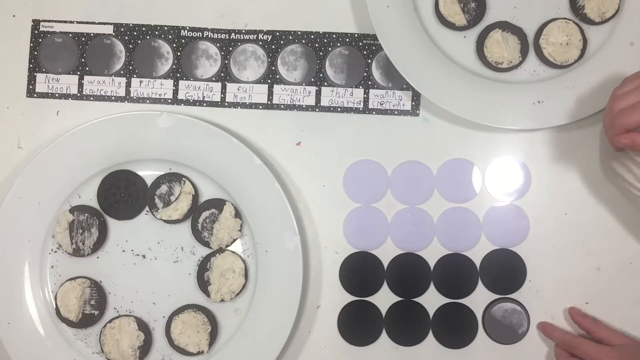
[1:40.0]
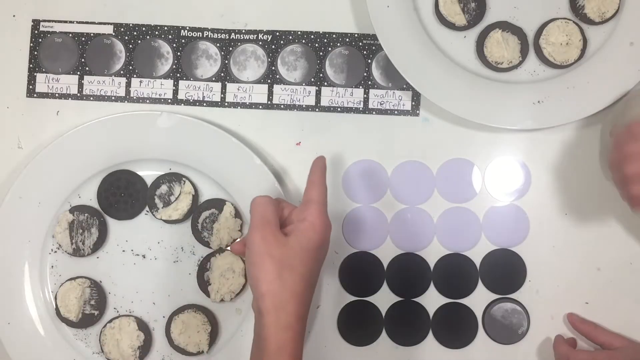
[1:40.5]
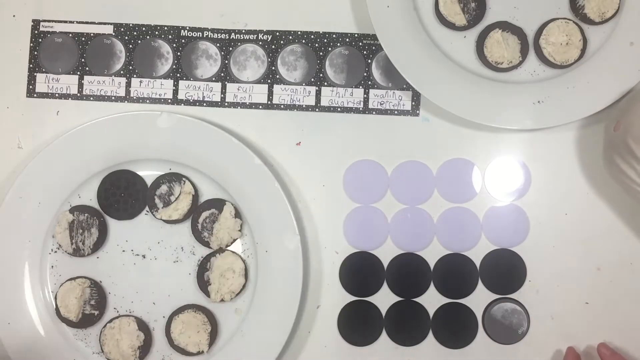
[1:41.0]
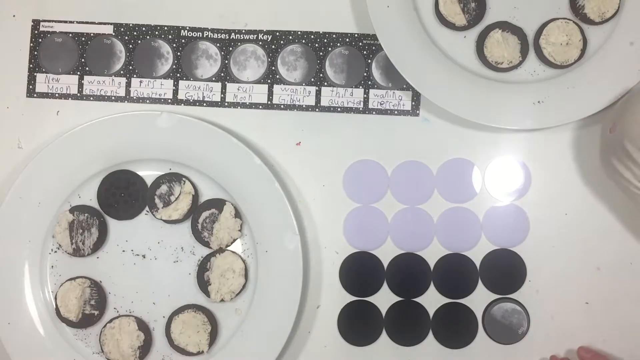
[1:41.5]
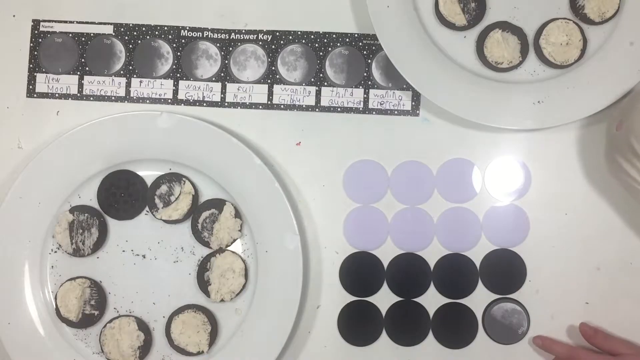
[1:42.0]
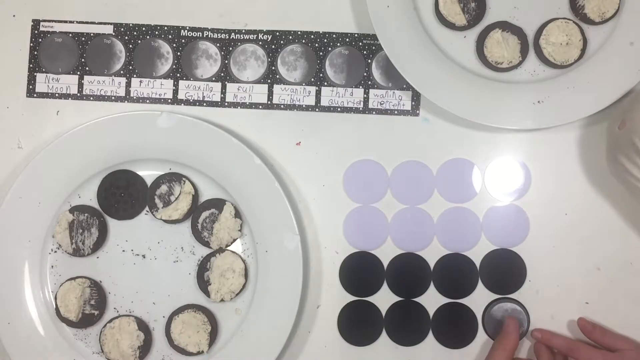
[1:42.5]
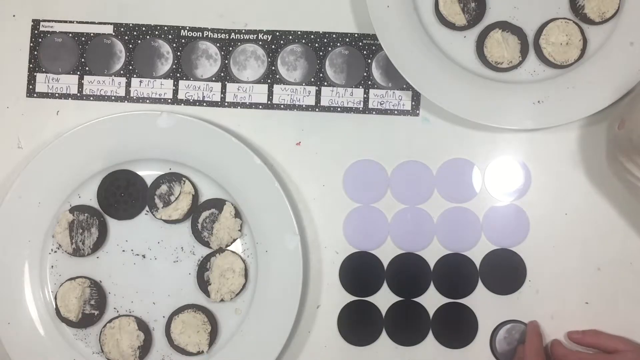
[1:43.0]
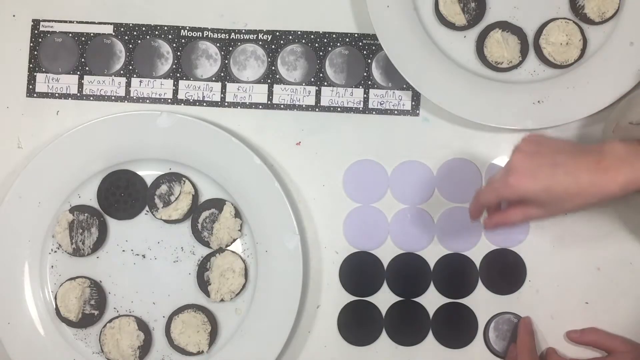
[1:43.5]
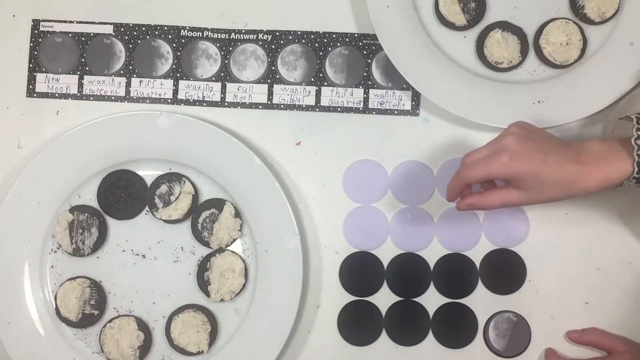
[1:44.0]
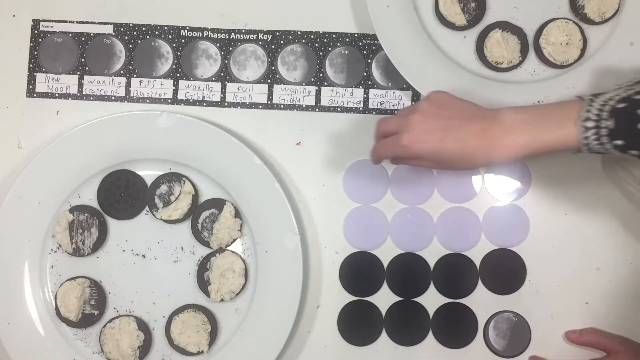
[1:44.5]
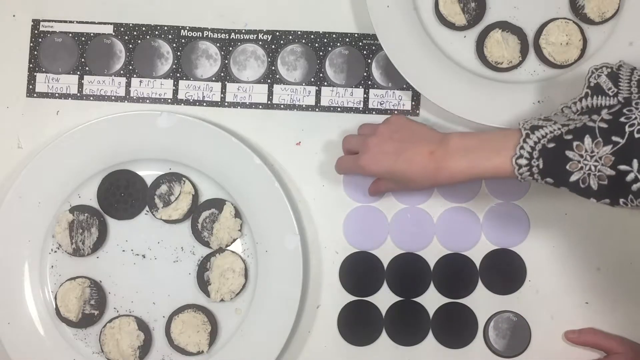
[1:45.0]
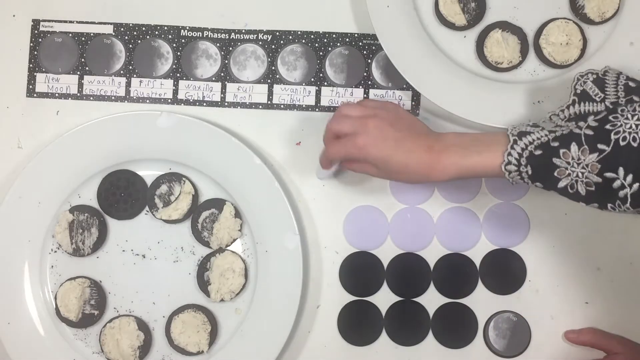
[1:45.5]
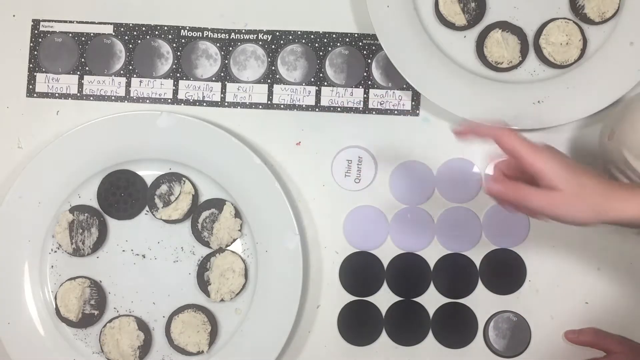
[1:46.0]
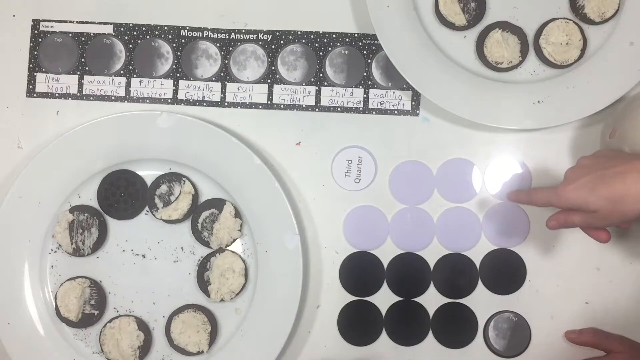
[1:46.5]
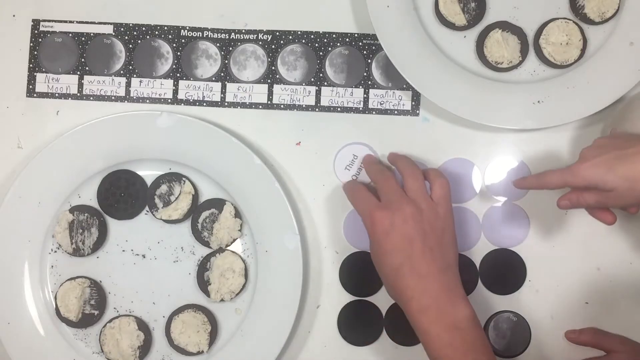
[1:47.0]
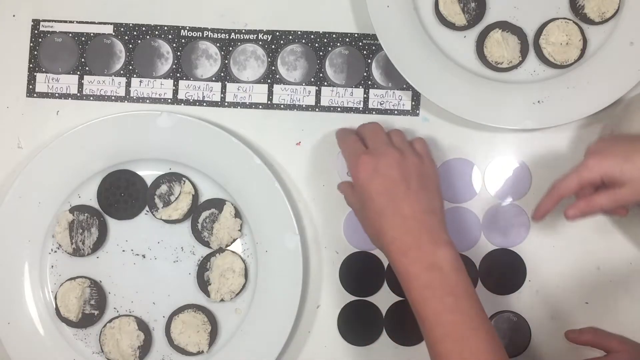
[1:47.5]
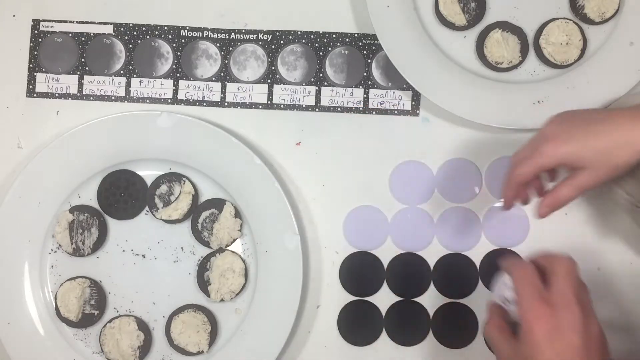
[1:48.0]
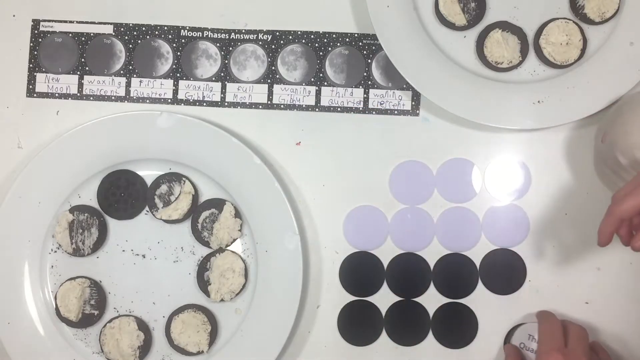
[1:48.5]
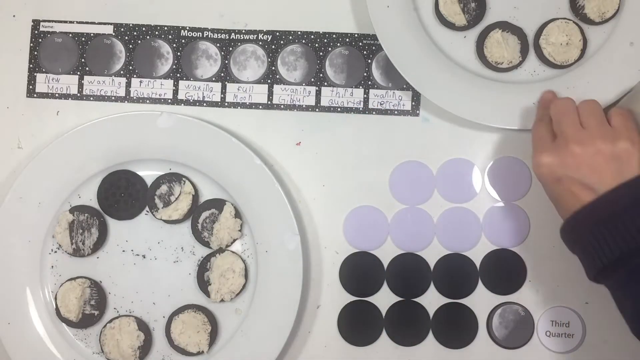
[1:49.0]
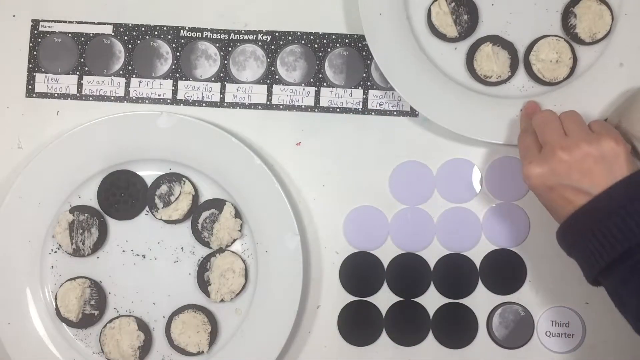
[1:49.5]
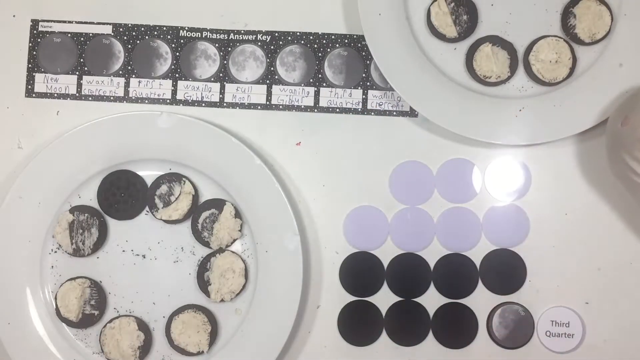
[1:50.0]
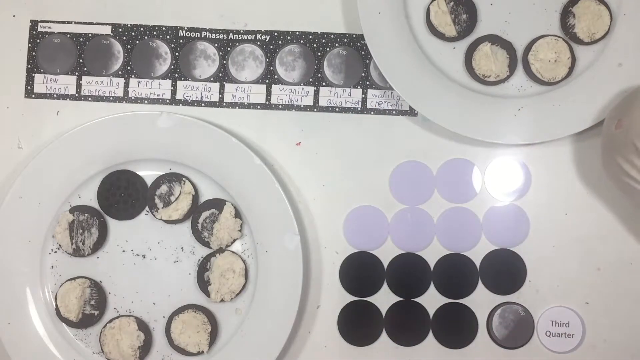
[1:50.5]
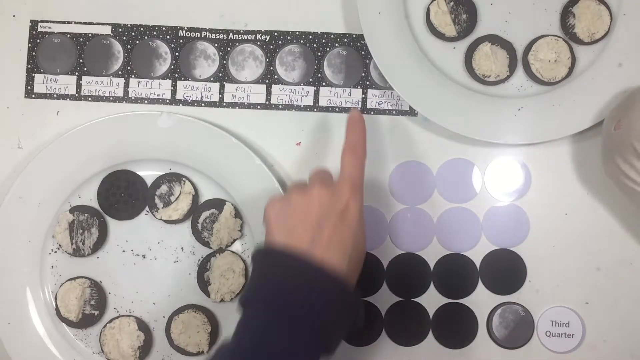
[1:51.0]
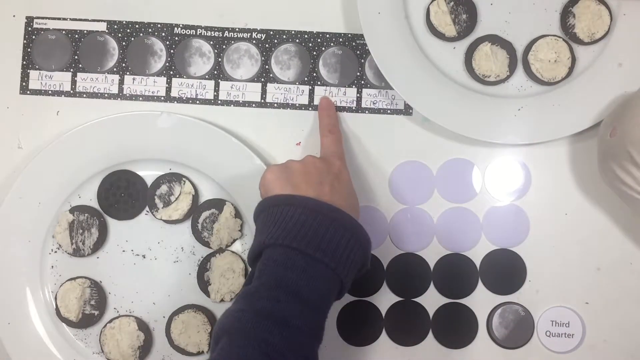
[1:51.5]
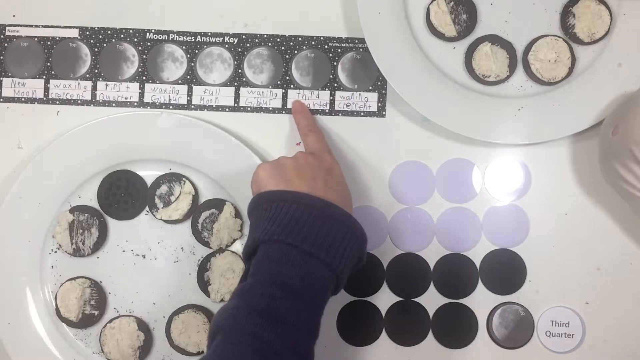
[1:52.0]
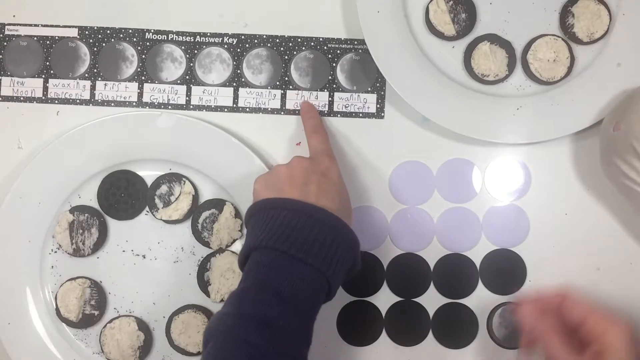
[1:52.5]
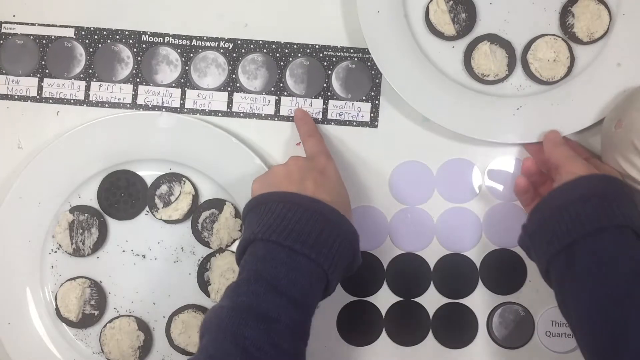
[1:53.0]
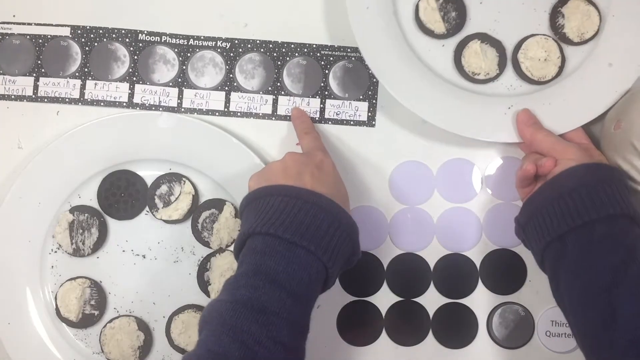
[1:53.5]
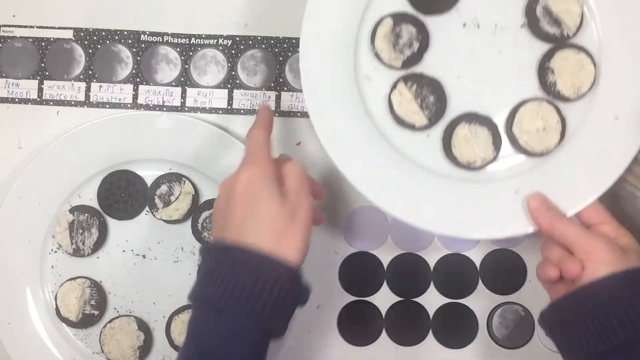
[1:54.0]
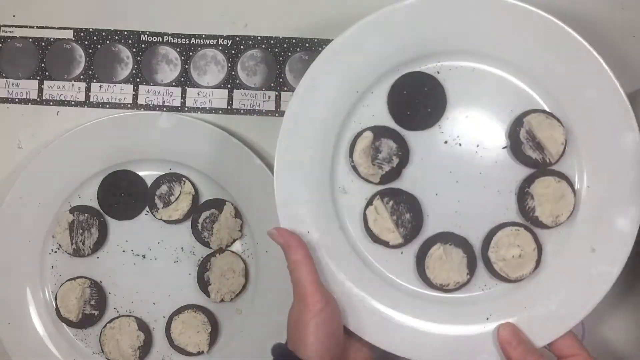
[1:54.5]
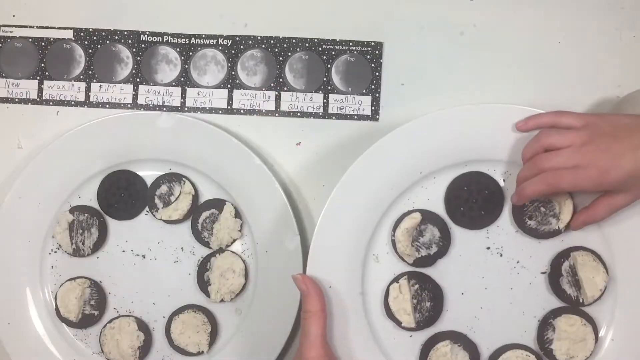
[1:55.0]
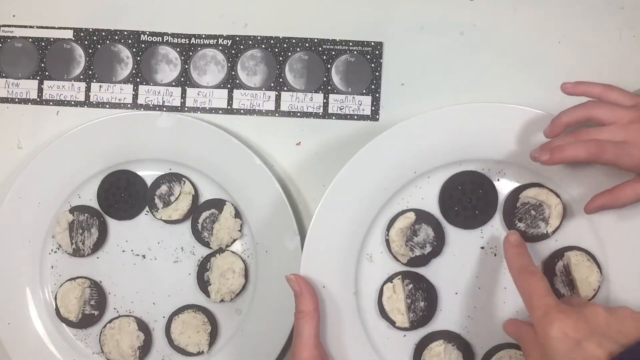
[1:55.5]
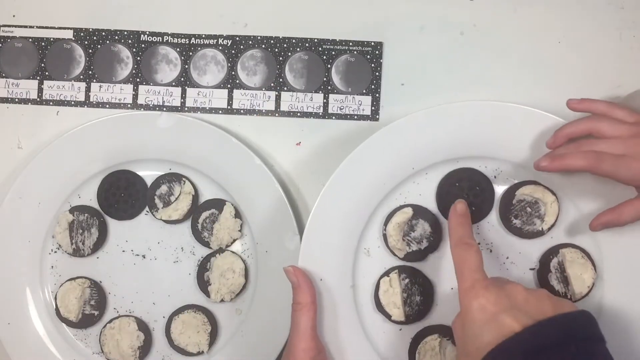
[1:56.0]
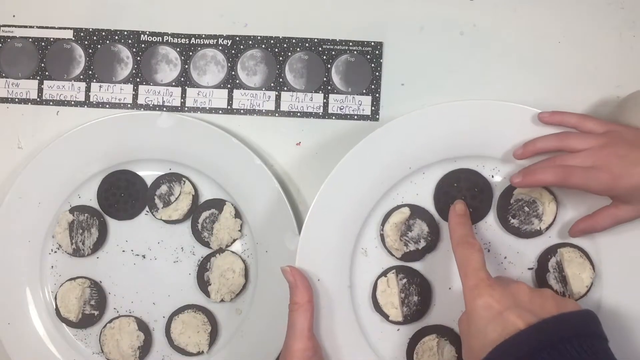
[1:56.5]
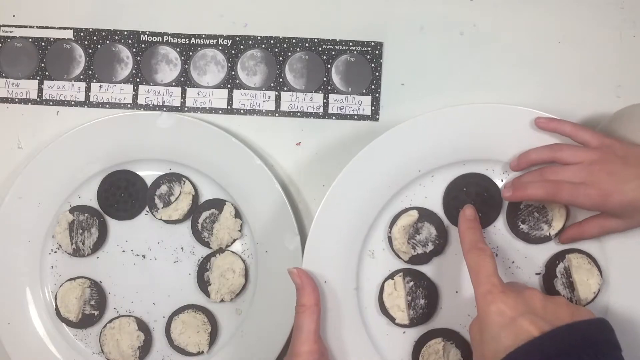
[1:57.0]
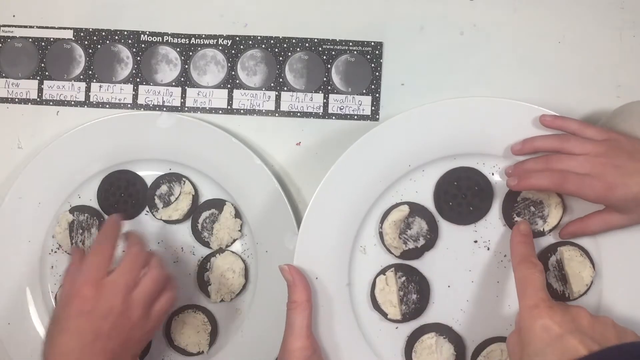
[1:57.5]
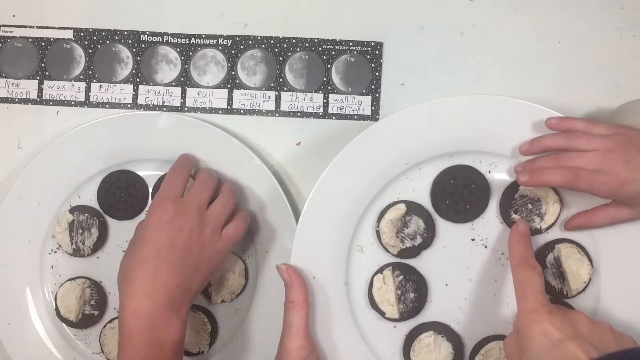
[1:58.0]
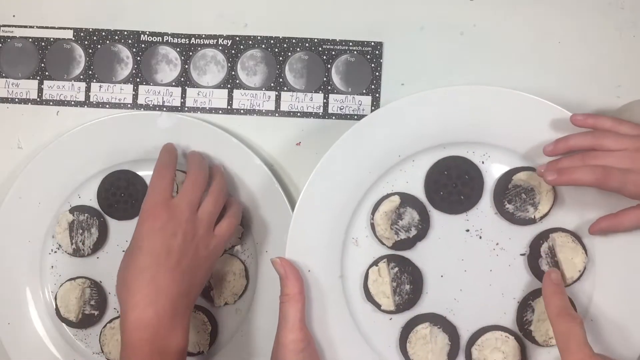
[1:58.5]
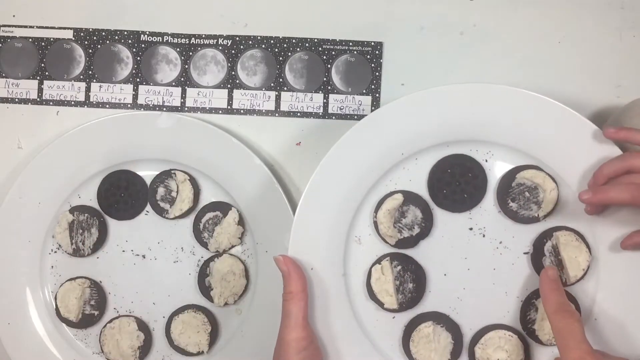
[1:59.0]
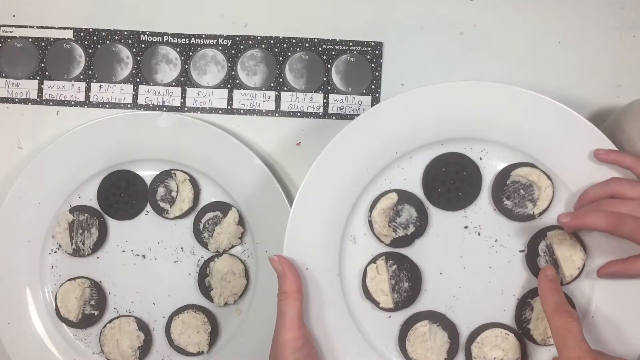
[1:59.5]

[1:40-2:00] A moon phases answer key at the top left of the screen shows the different phases of the moon. The plates of opened cookies, scraped into shapes representing the moon phases, are at the bottom left and top right of the screen. What look to be plastic discs, dark and light colored, are at the bottom right. A hand reaches in and flips over a disc; each disc has something written on it, possibly the phases of the moon. The cookies are then pulled into closer view, and the hands move them around and point at them, possibly explaining how each cookie relates to a phase of the moon.